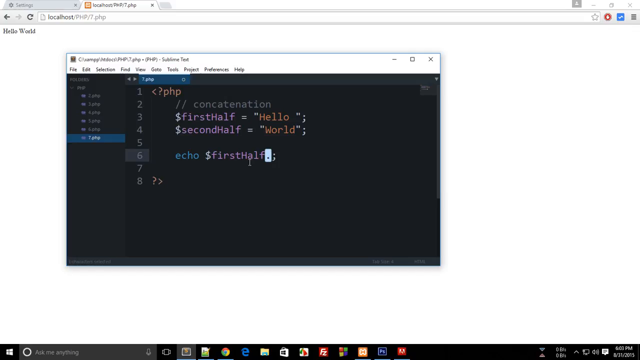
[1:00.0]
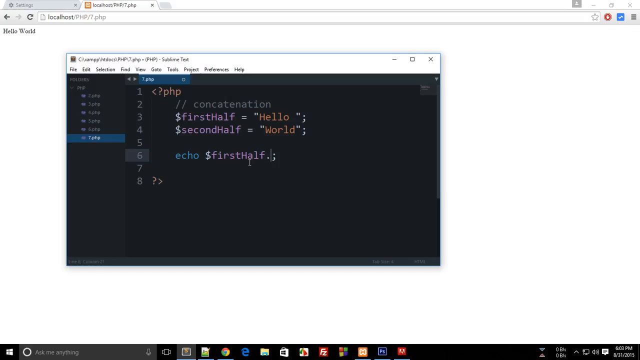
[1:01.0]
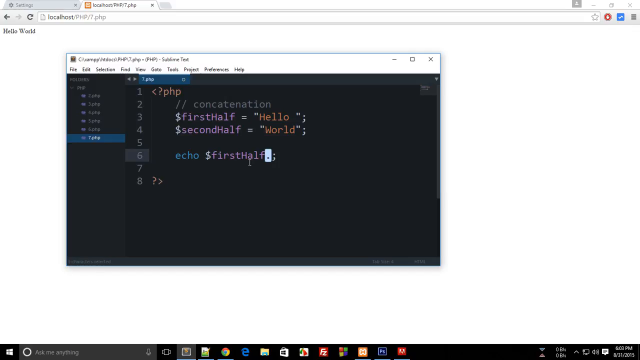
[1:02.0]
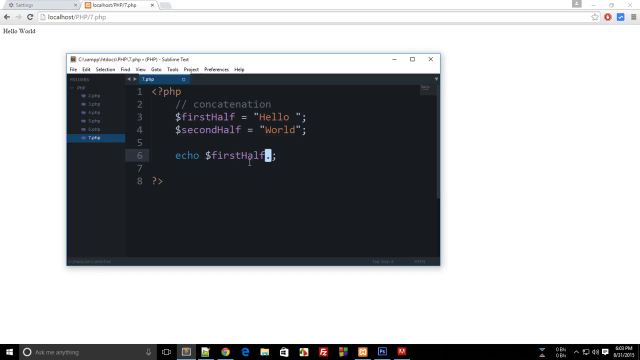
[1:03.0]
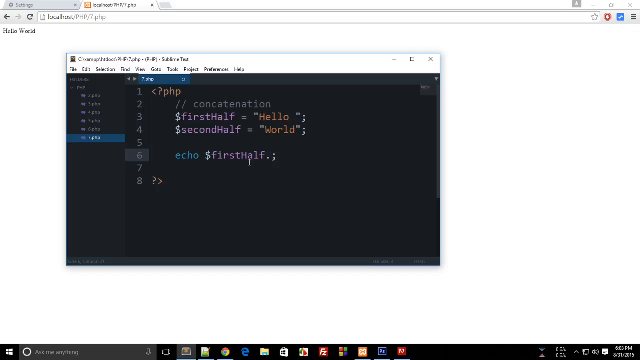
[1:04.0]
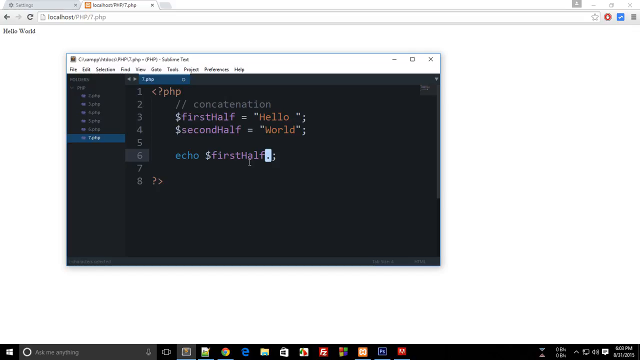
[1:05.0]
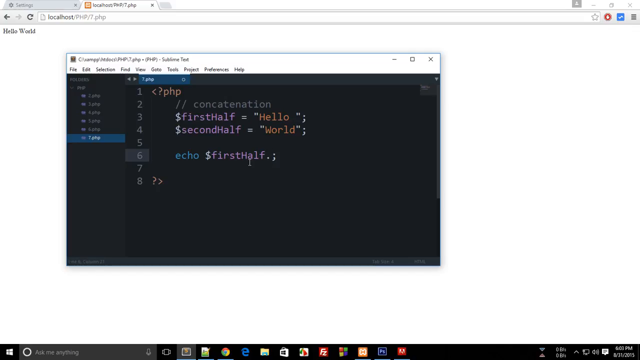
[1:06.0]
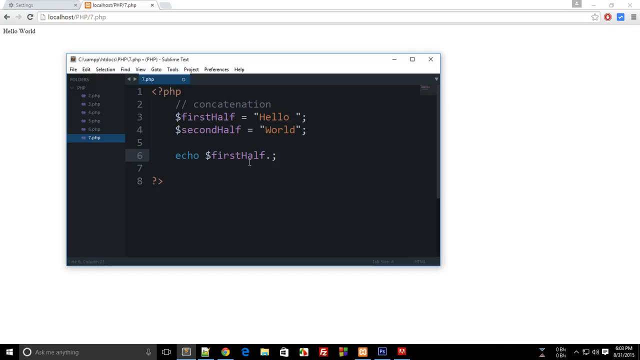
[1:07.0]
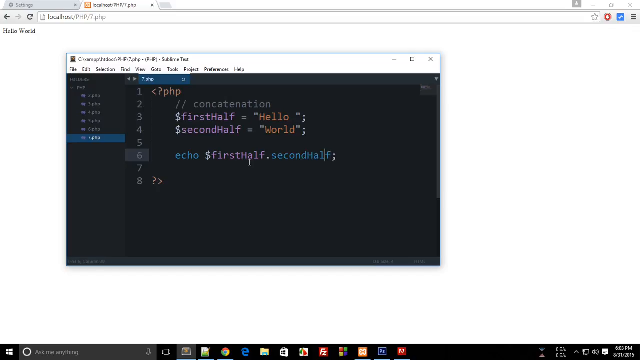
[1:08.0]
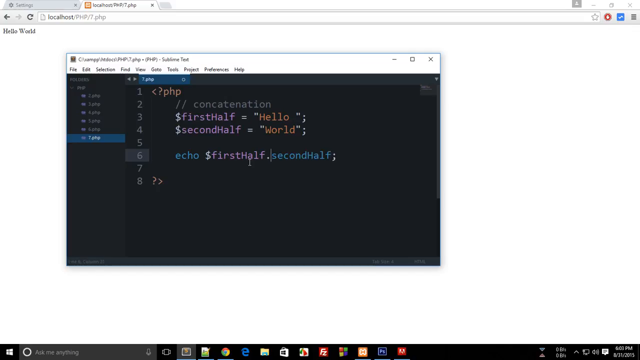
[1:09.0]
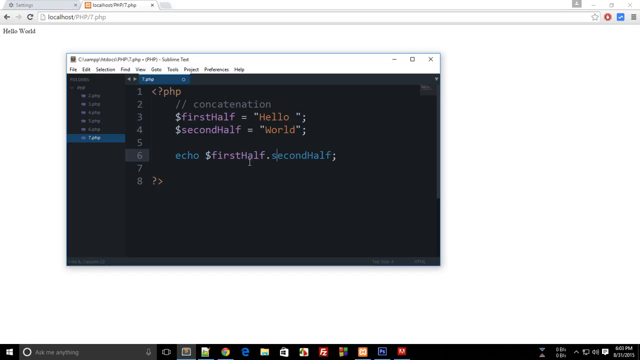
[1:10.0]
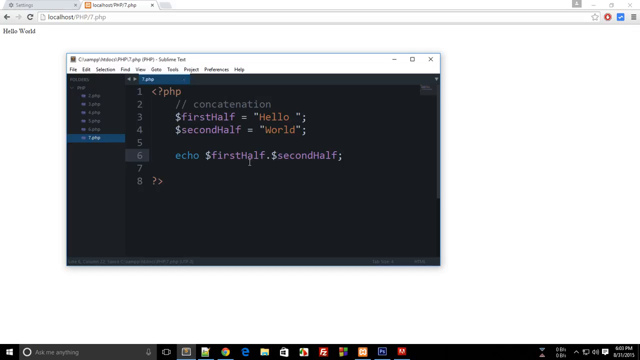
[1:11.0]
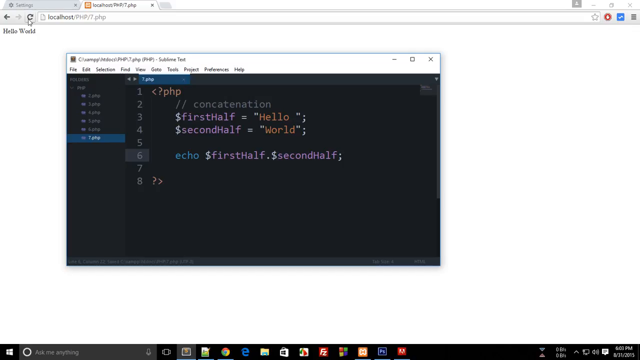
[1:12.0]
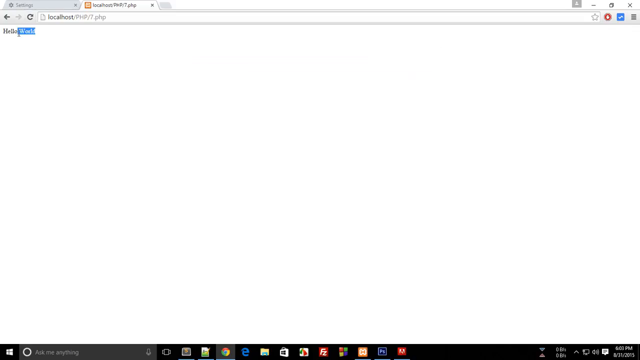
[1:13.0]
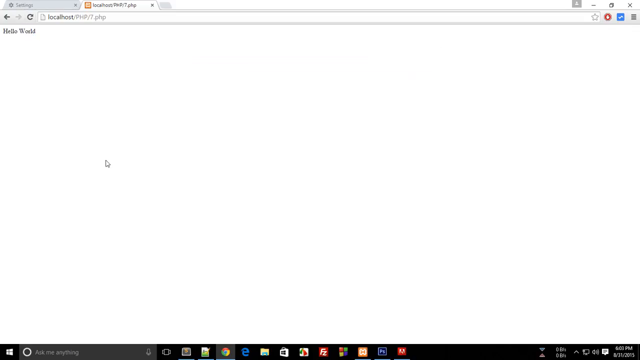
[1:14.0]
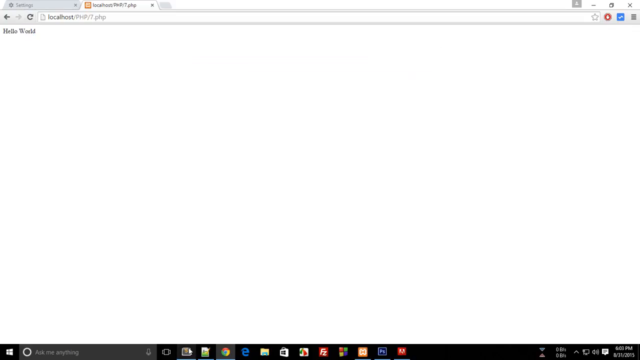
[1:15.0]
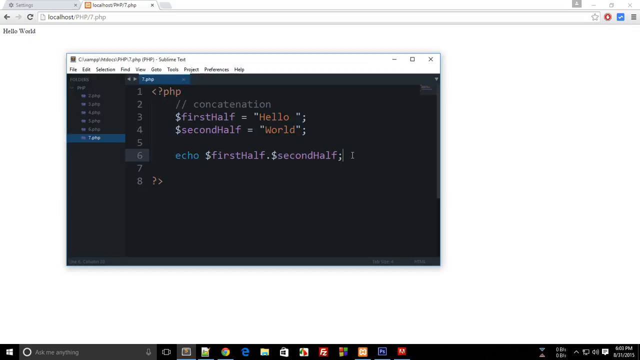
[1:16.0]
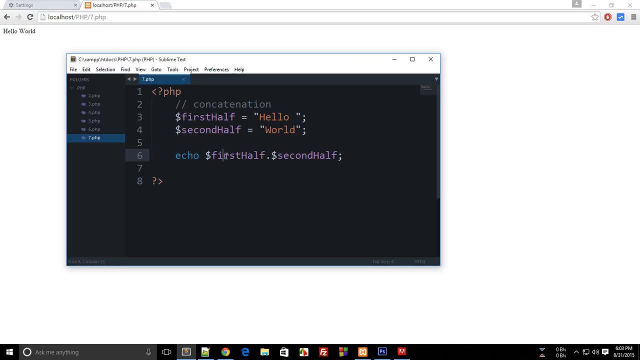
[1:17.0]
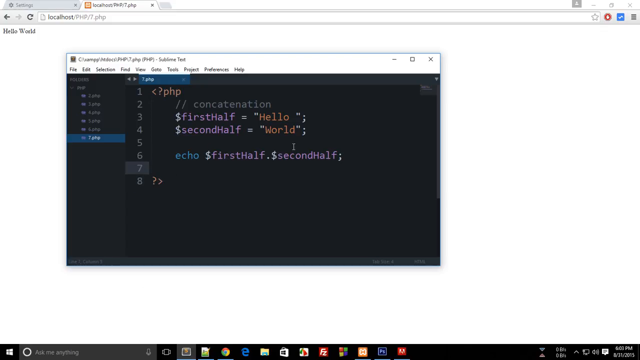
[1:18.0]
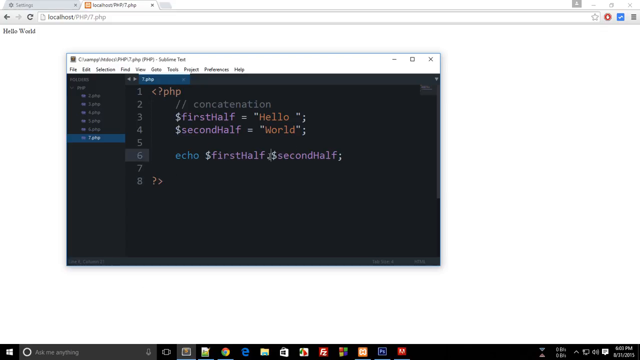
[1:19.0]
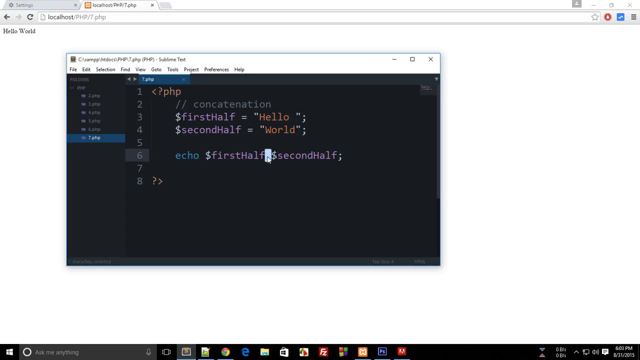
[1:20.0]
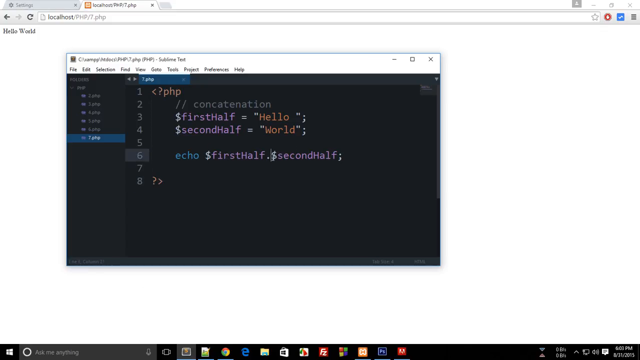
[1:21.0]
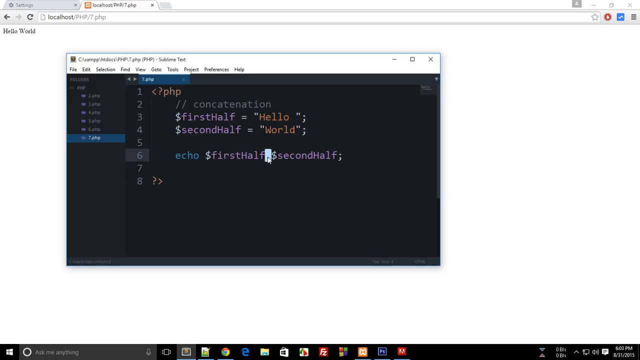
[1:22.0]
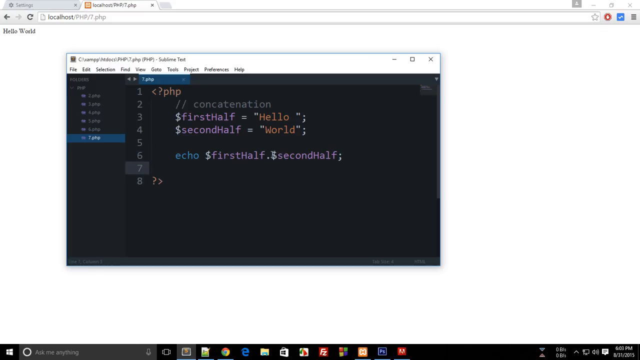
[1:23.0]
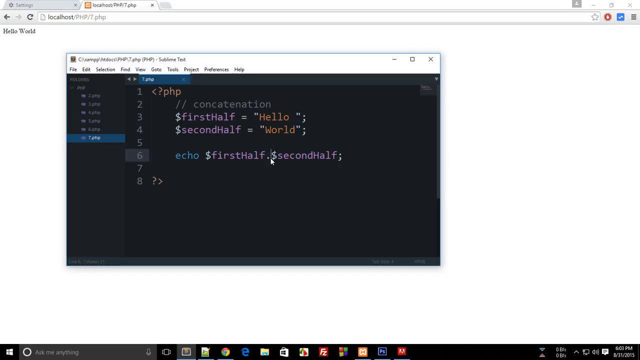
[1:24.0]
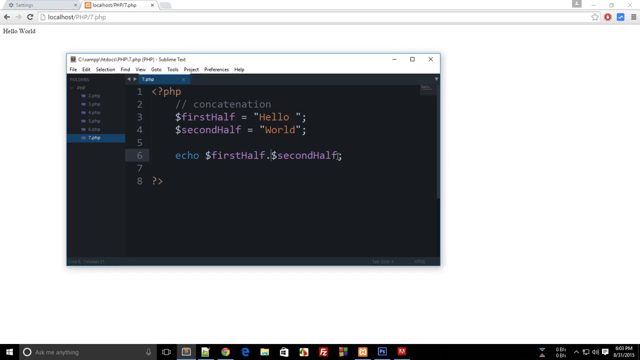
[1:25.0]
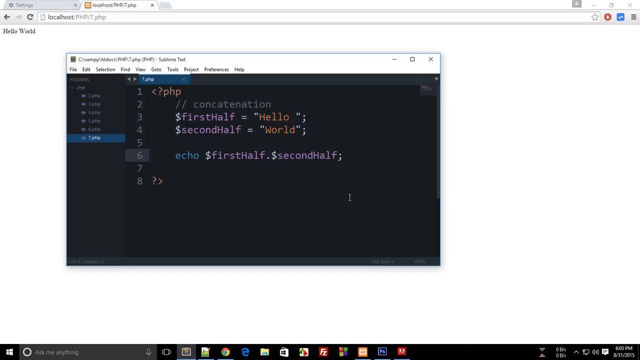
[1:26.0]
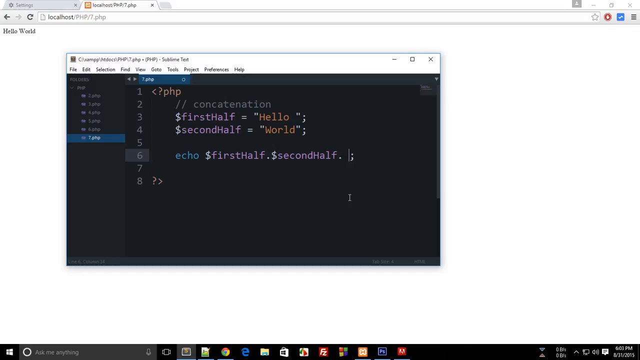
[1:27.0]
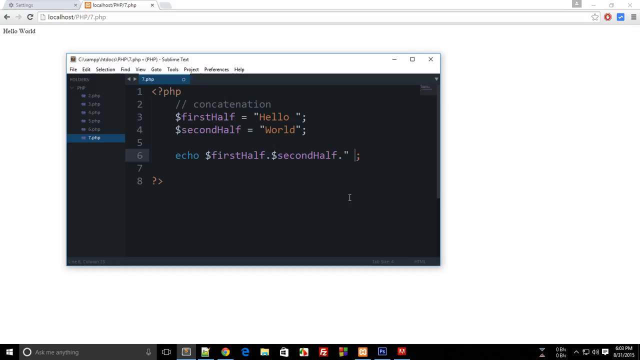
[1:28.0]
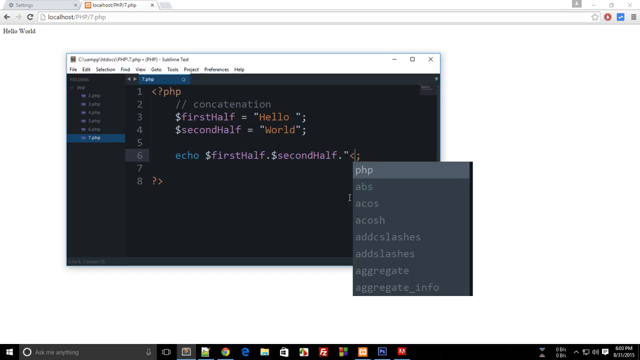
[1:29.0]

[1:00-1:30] The individual adds a period to the end of the first half segment and a reference to the second half variable, then tests it on localhost in the browser, where it still appears to show "hello world". They go back to the IDE, Sublime Text, apparently to edit further. They add double quotes and start writing another piece of code, possibly HTML-related code to change how the text looks.